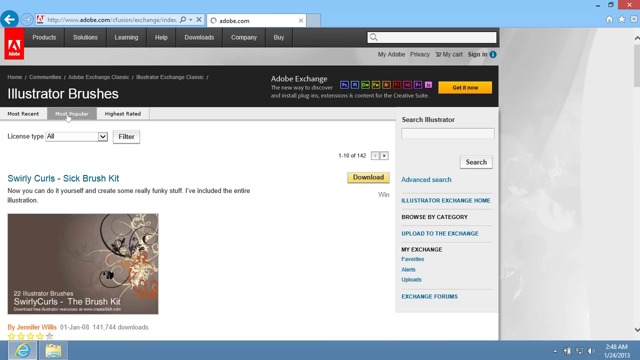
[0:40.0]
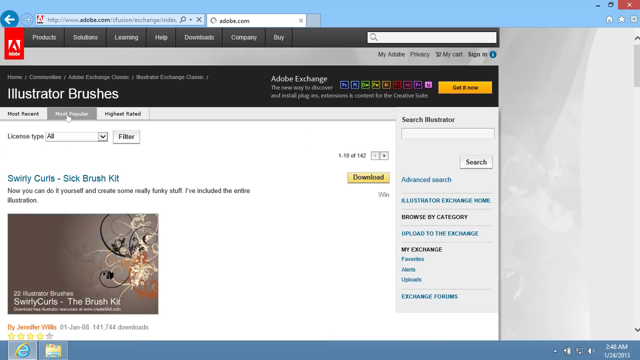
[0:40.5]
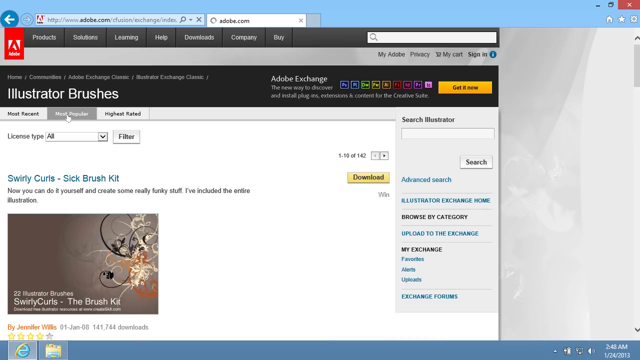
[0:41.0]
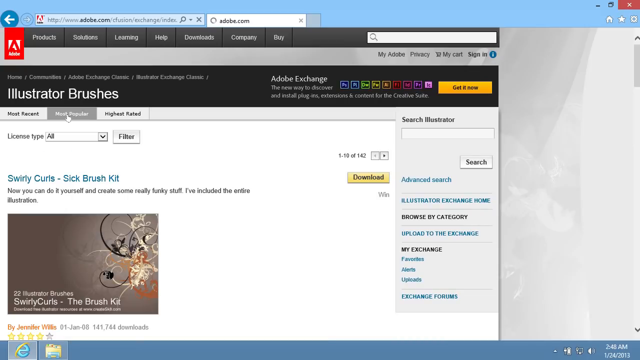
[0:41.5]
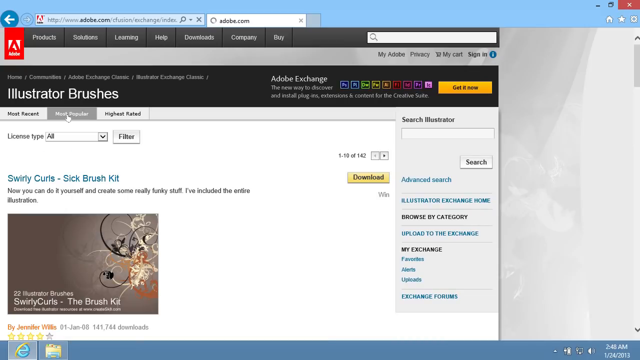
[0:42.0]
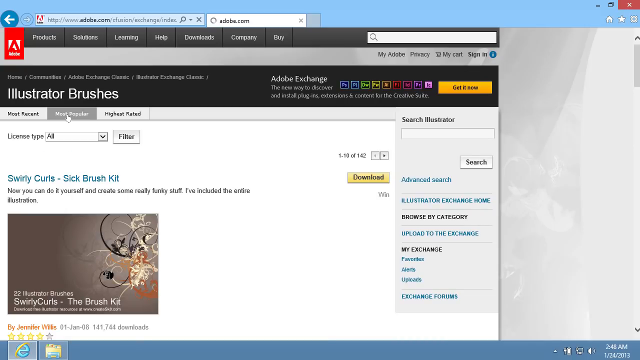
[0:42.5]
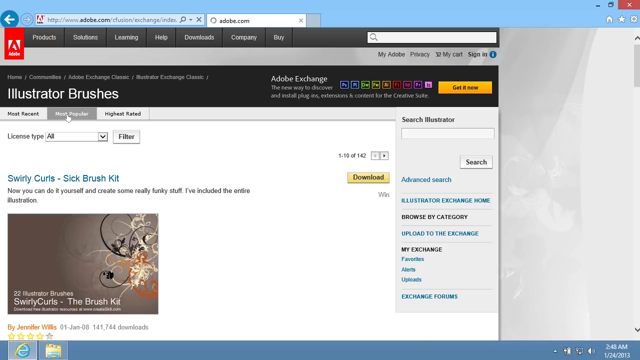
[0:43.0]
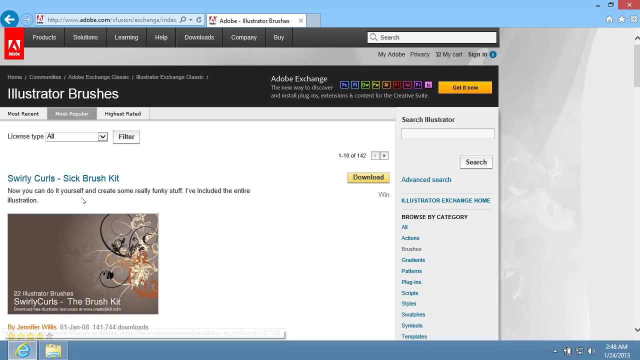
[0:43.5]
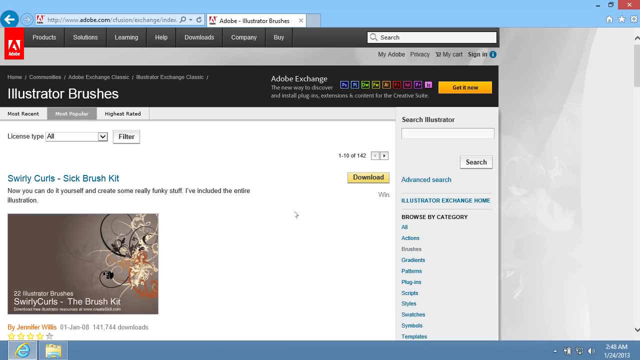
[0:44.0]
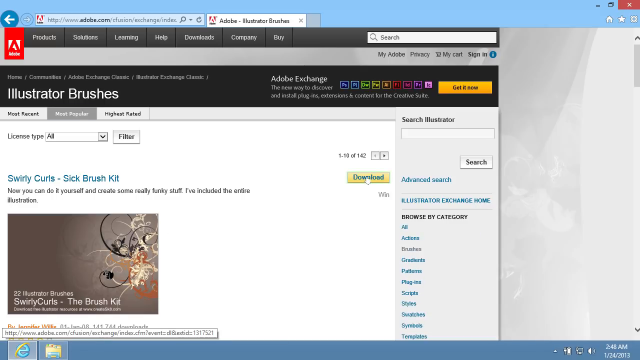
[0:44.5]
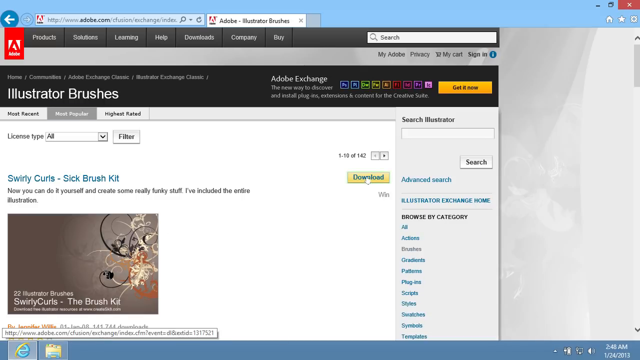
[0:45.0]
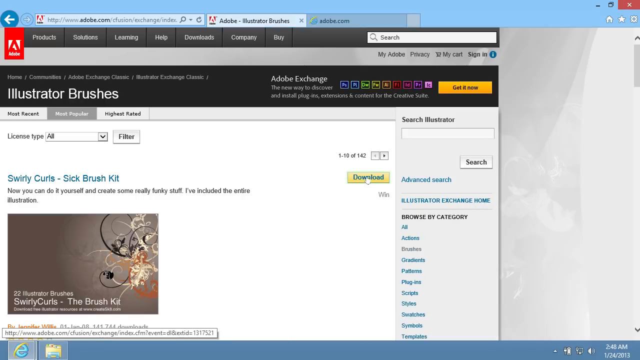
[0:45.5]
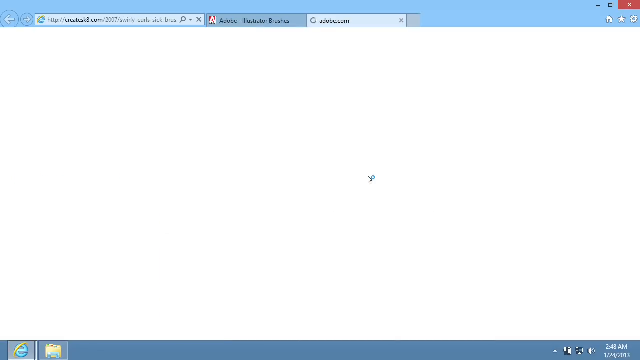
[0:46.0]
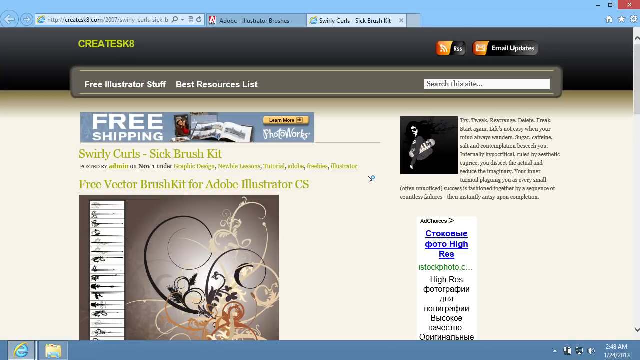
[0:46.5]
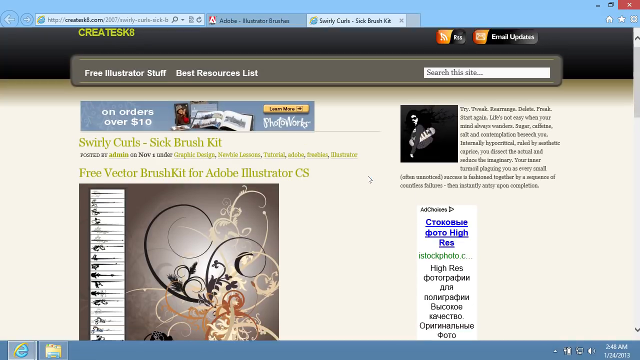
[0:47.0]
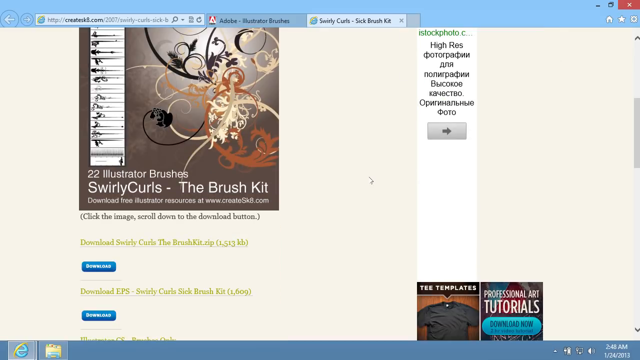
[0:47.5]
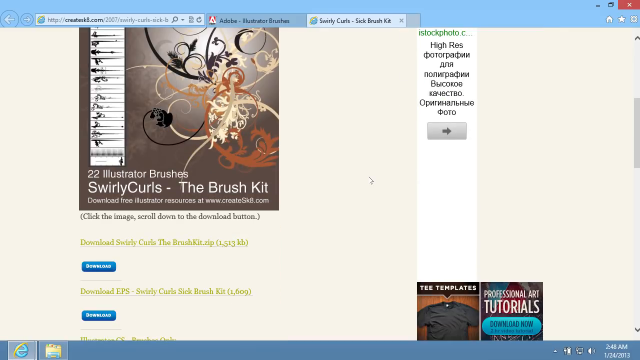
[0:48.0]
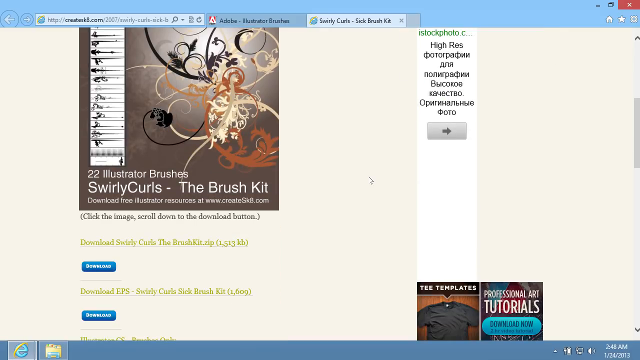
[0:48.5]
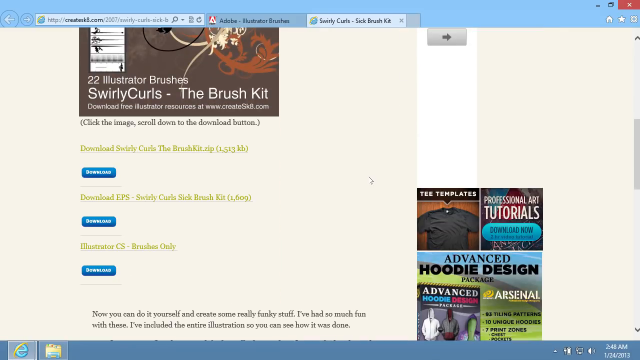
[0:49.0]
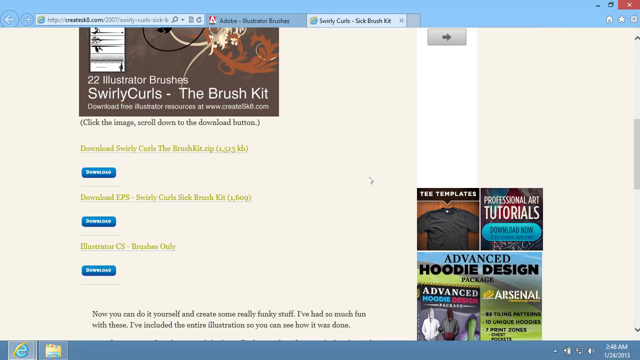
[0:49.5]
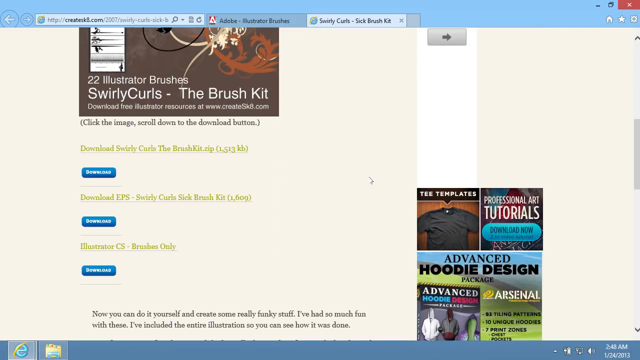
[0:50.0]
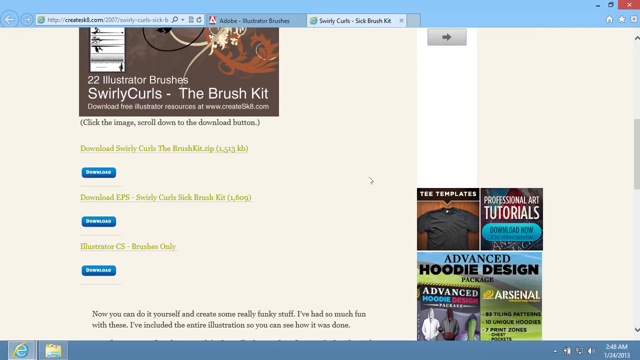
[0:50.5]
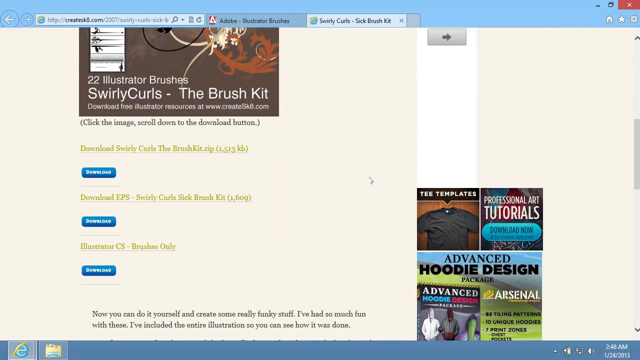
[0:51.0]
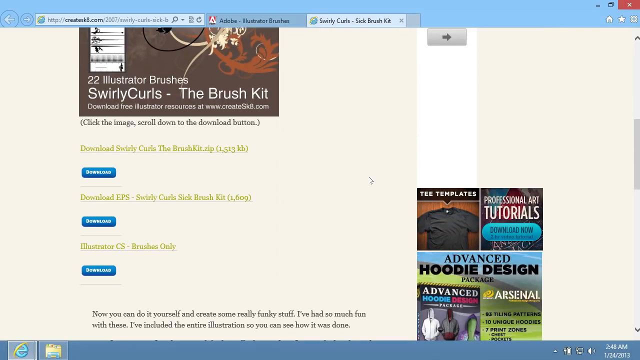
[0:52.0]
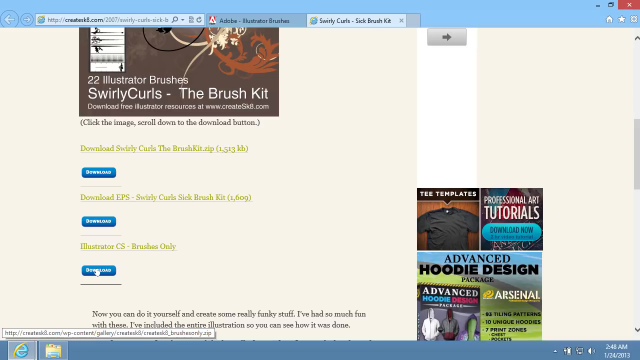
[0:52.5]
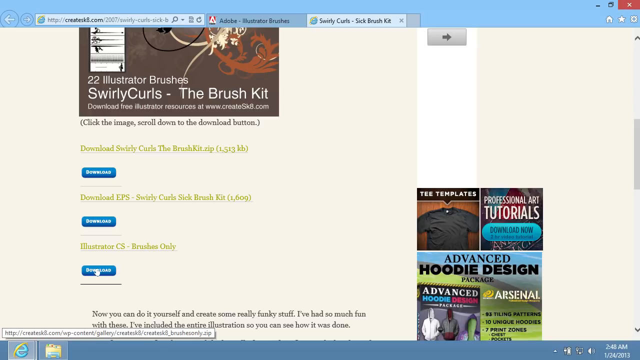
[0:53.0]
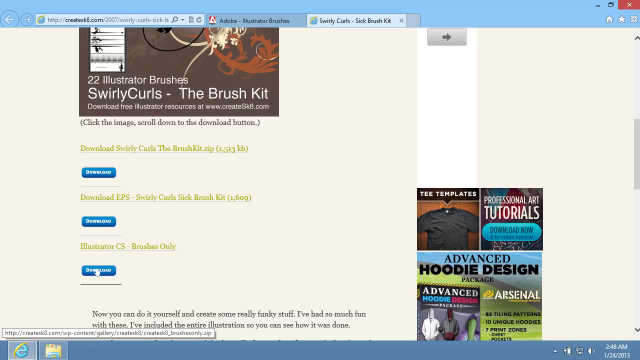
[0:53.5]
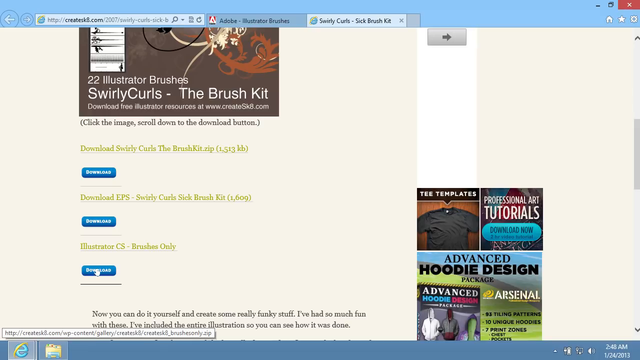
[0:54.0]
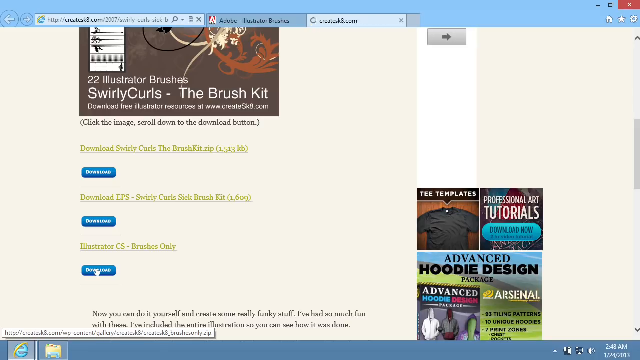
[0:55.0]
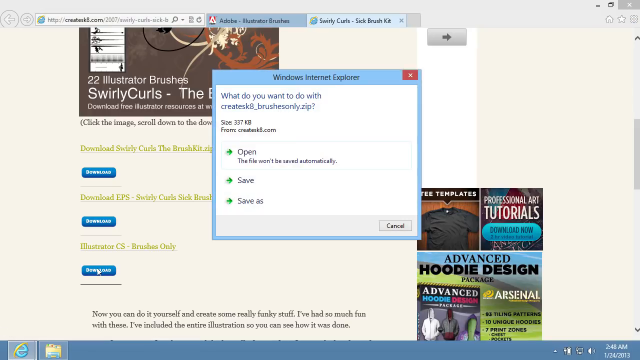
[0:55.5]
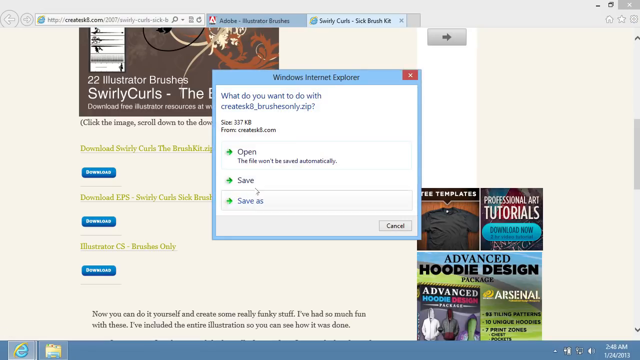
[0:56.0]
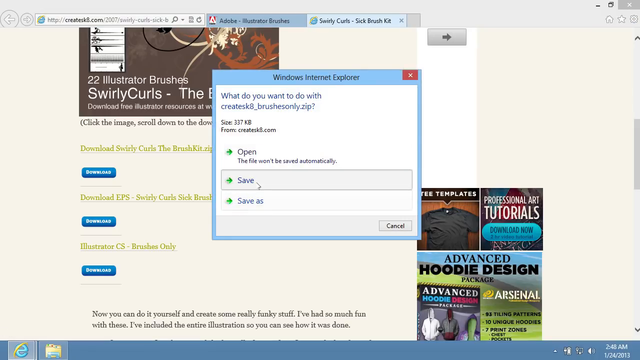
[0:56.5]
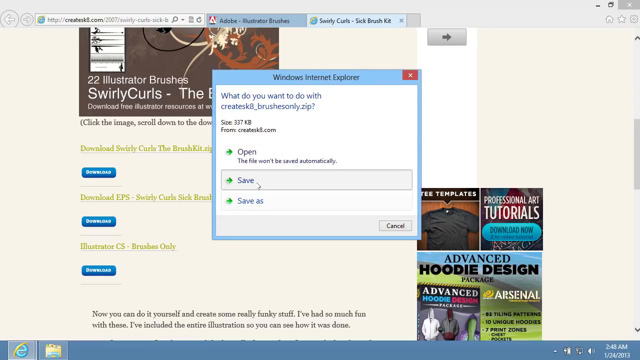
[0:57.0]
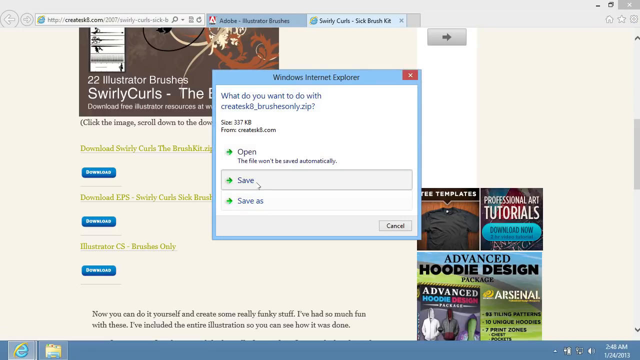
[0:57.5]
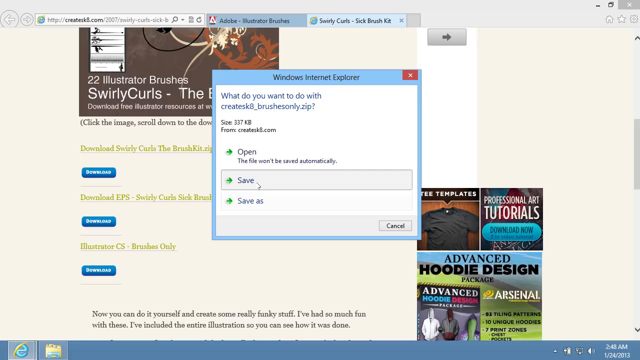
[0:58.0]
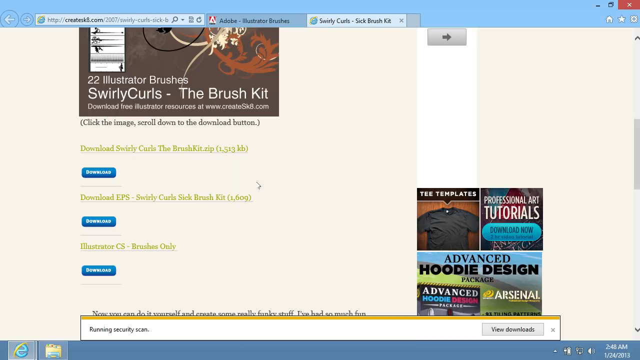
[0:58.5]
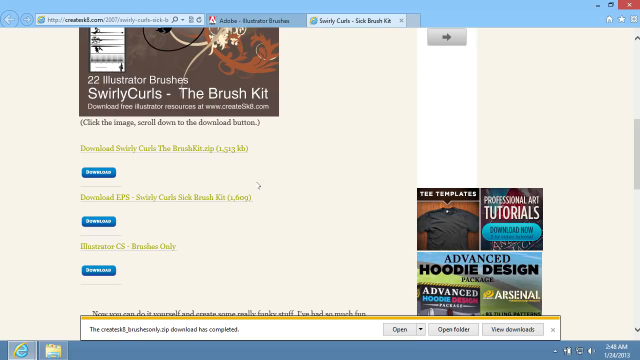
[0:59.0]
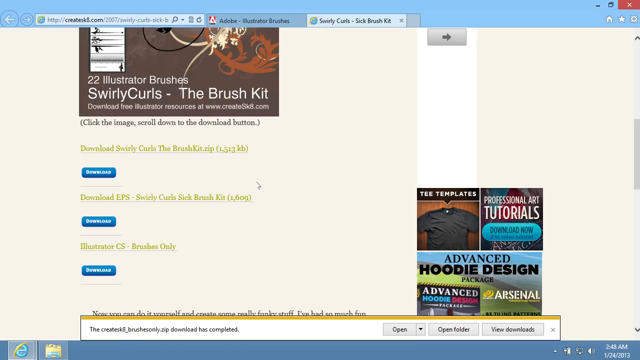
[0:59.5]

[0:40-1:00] The screen shows what looks like the LinkedIn advice page, with a feature for the "Swirly Curls" brush kit and an option to download it. The user stays on this page for a while and clicks on the Swirly Curls brush kit, then seems to scroll down the page to look at it or read about it. Adverts for other parts of the site or other products are also visible on the screen. The user then seems to press the download button.